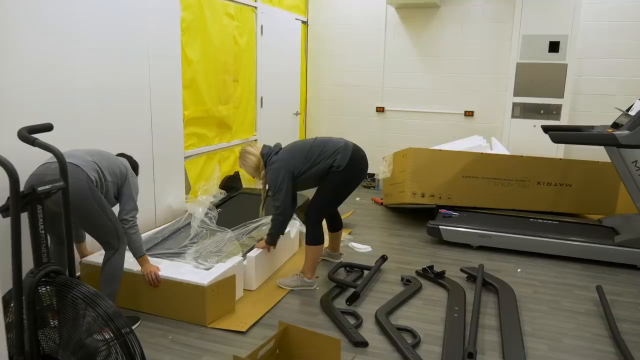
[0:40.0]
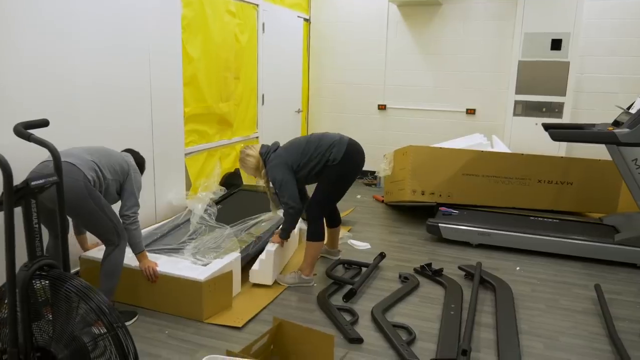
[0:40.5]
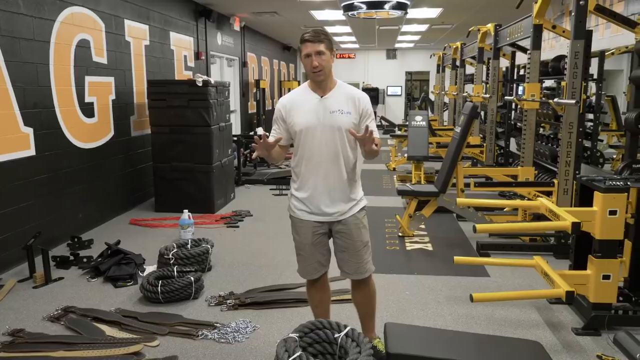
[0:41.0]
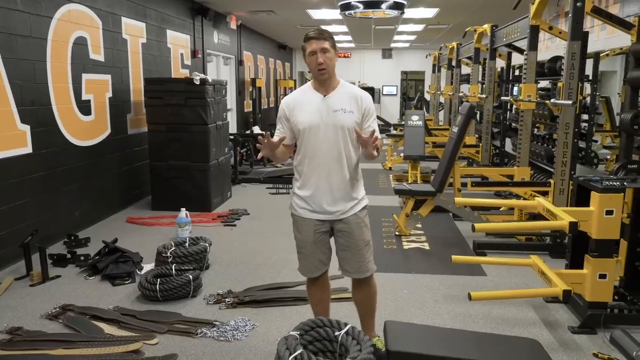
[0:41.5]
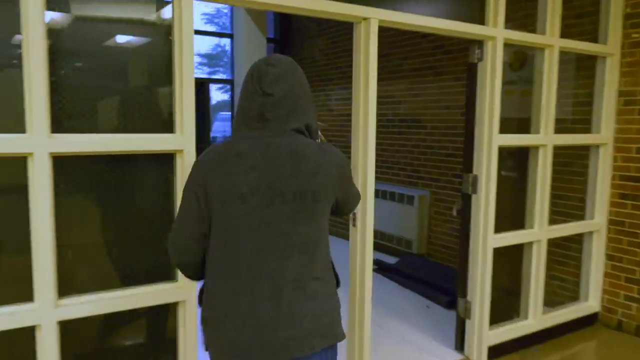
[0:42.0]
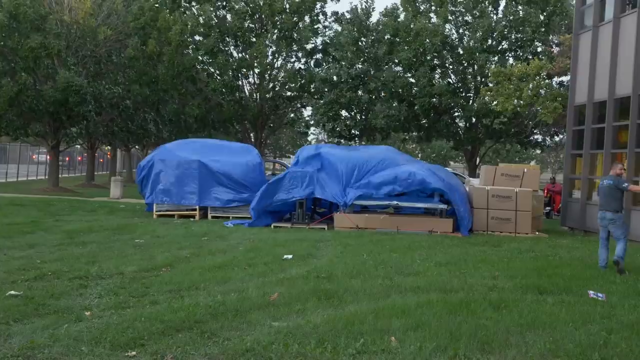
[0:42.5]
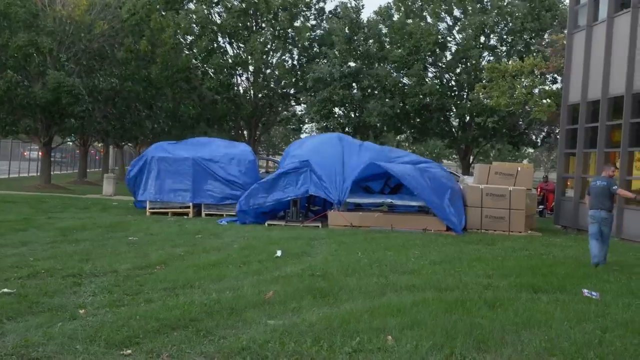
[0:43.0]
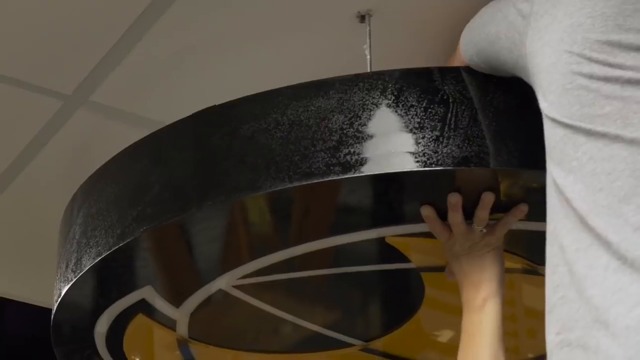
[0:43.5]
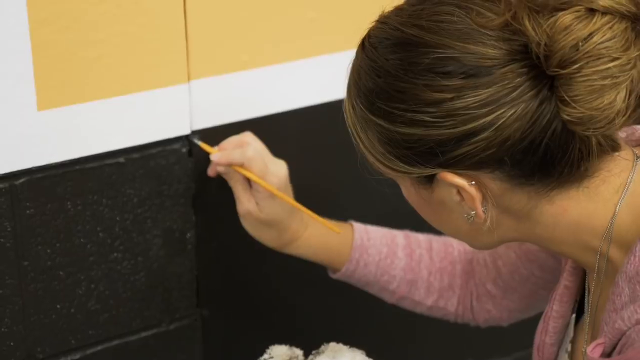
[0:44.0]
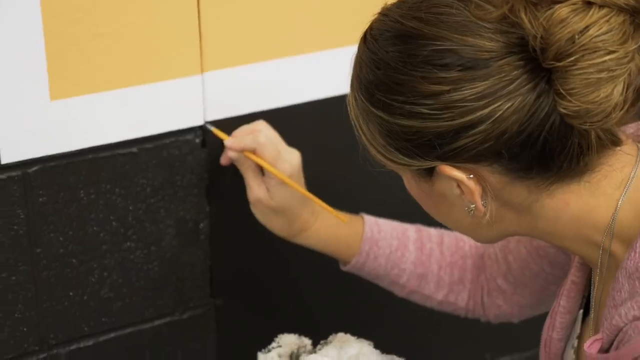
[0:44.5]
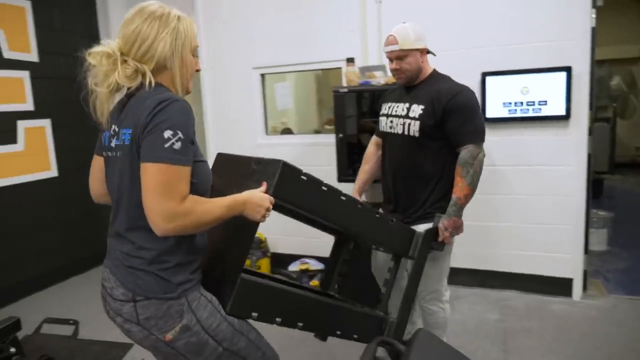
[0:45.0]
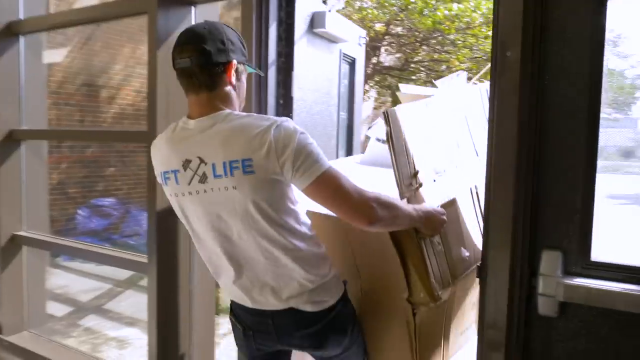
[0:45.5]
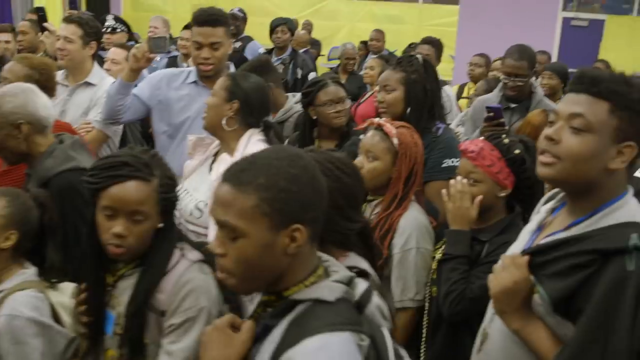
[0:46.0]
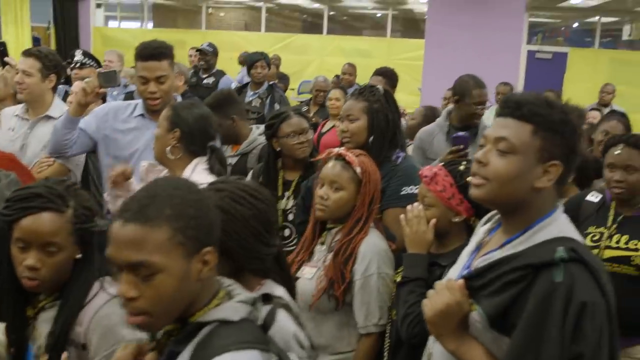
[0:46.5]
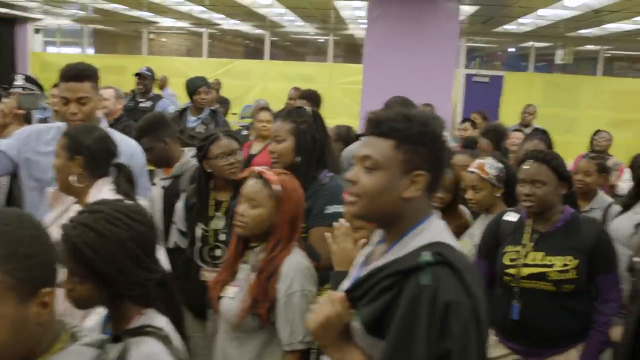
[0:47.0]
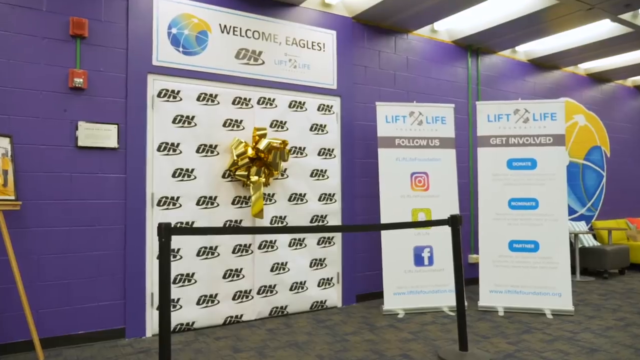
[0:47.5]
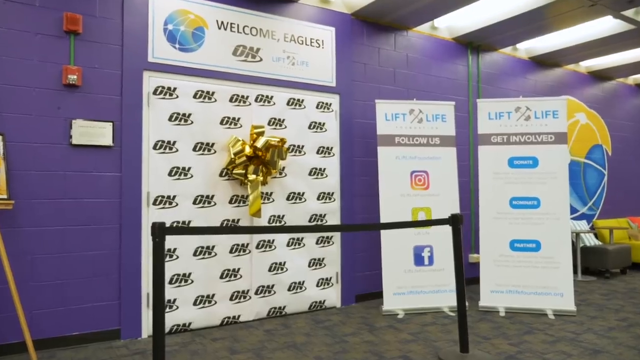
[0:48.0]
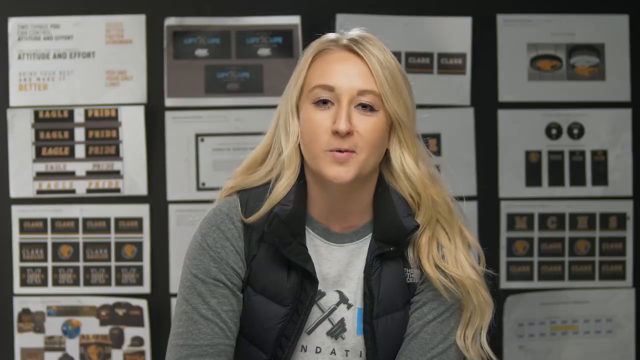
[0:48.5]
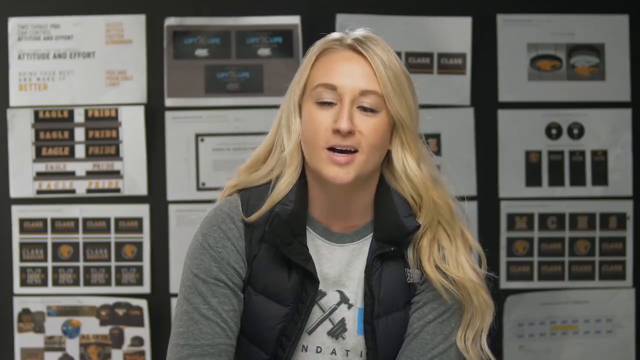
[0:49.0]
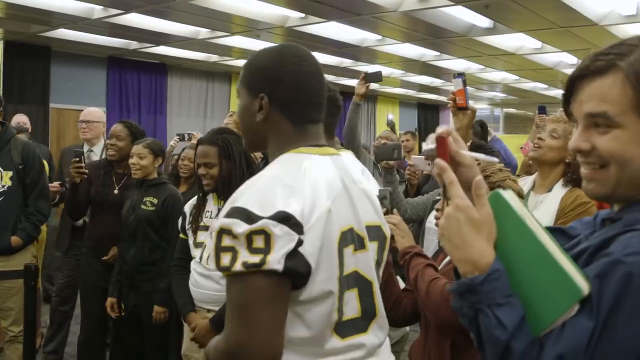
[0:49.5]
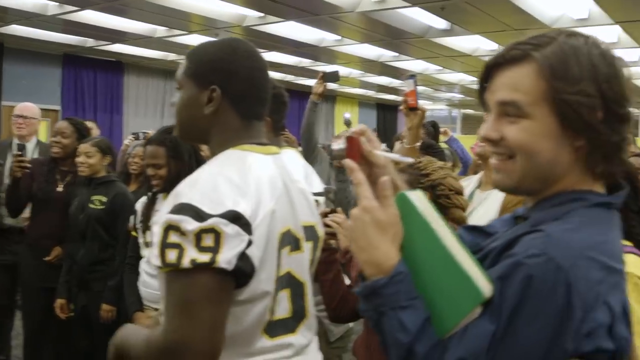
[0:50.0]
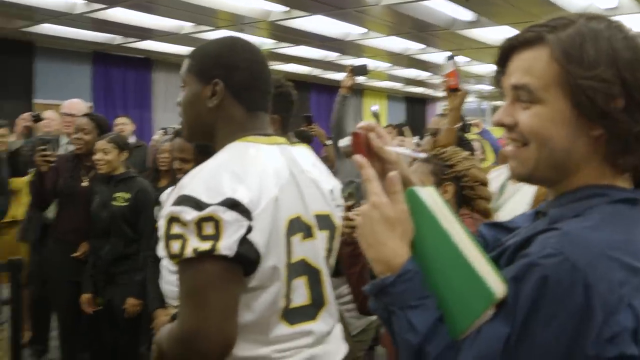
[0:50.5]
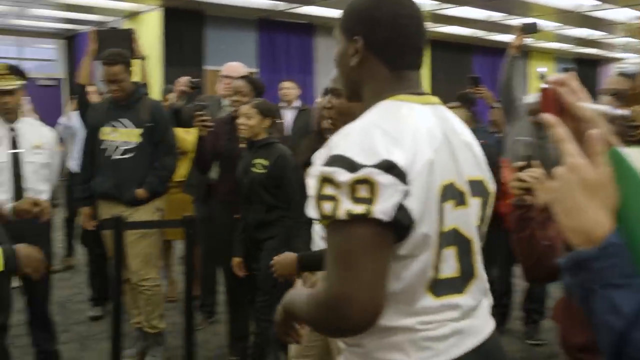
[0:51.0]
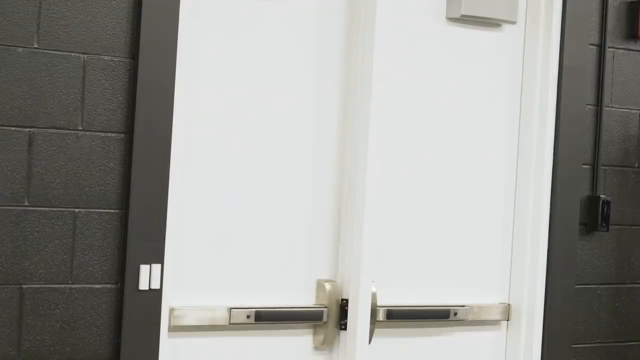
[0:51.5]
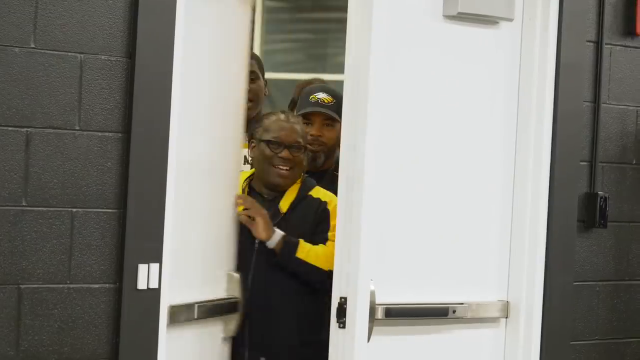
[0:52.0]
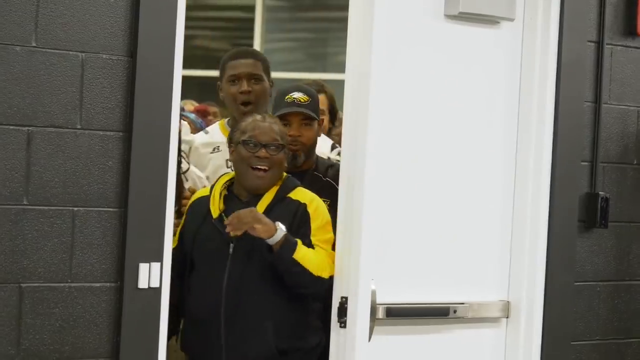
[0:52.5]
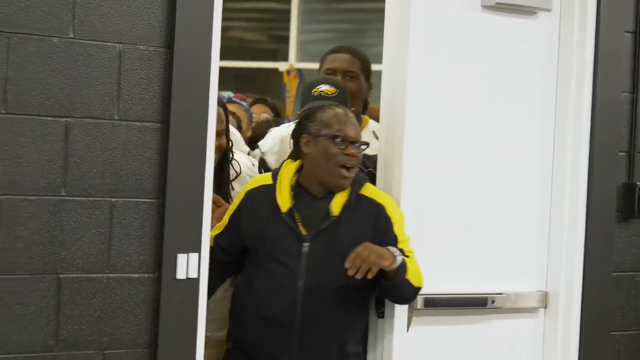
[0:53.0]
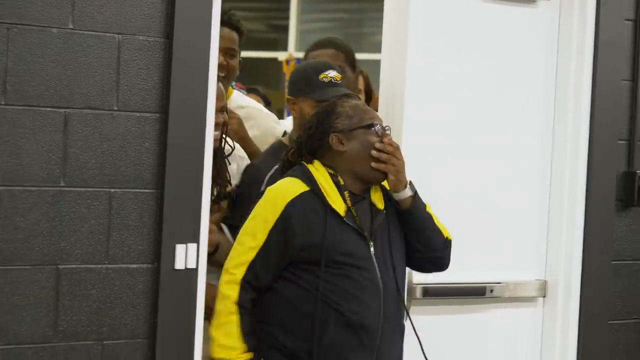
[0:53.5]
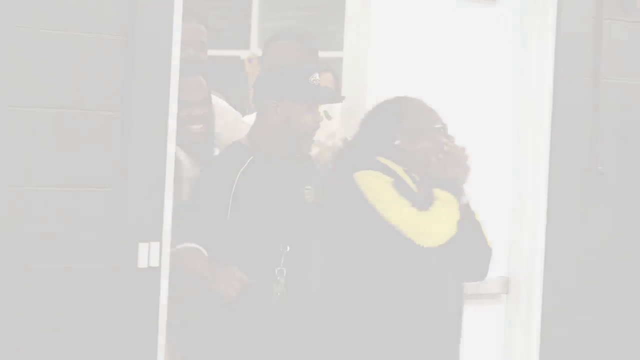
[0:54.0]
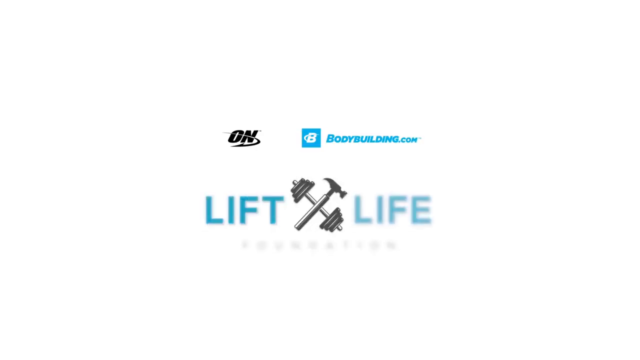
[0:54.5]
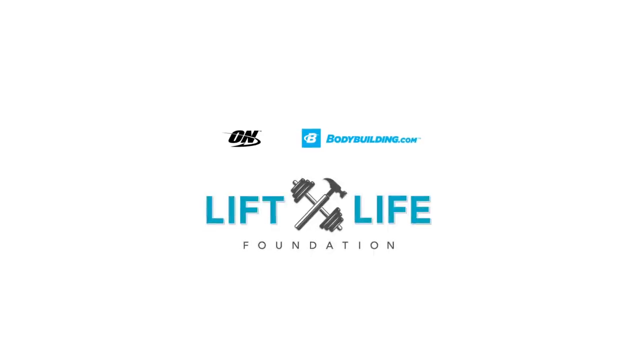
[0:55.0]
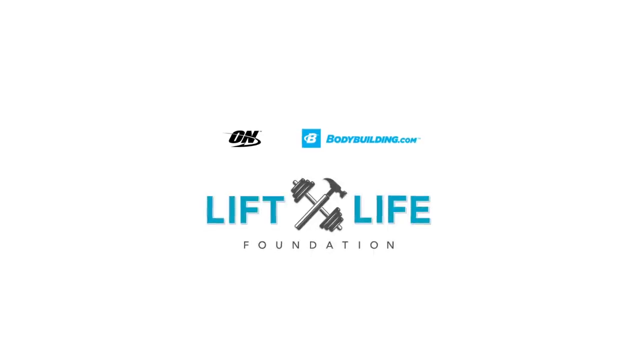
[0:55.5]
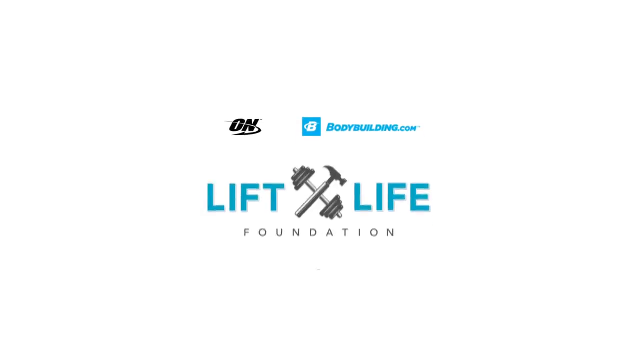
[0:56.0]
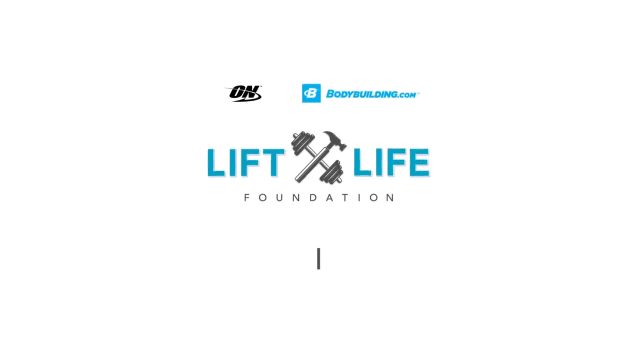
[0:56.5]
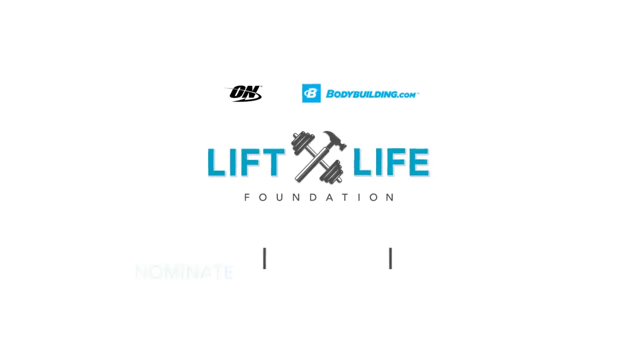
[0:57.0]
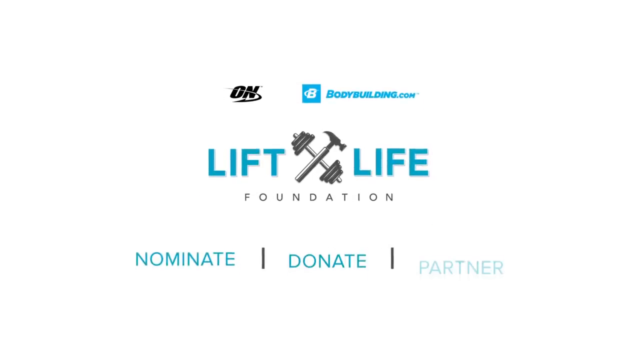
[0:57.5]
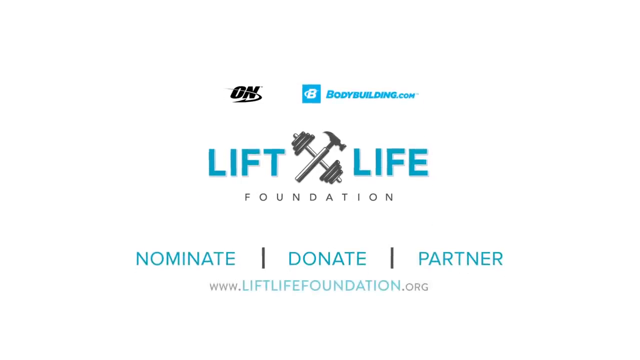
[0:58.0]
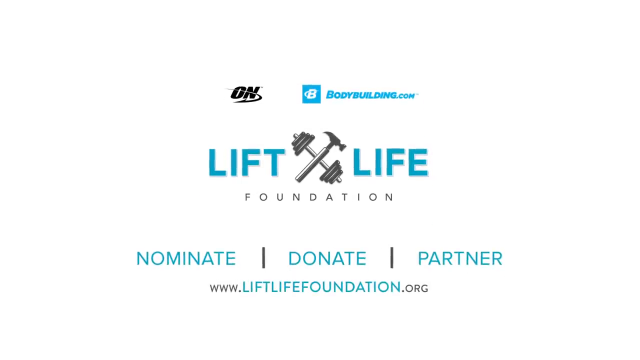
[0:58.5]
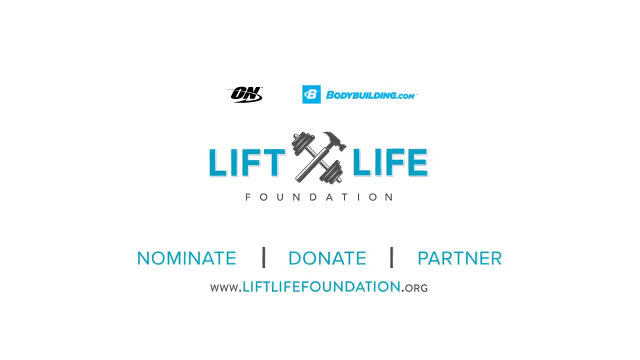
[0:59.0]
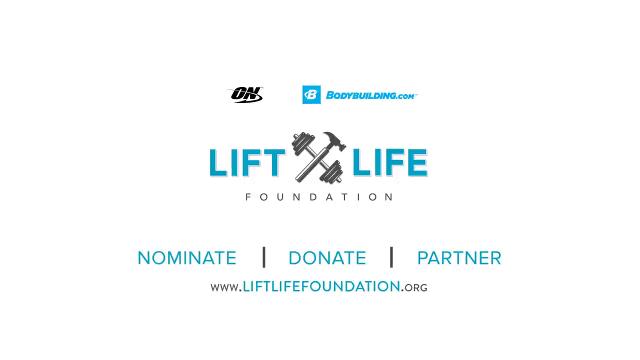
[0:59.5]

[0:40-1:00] People inside the gym appear to be unpacking some equipment: they lean over a big cardboard box with its lid off and remove white styrofoam from it, and what looks like the base of a treadmill is inside. A man in a white T-shirt and gray shorts stands in the middle of the gym speaking to the camera. The left wall of the gym is black, with orange letters that say "Eagle Pride". A person in a hoodie walks into the room. Equipment outside is covered in tarps. People work on the inside of the gym, apparently bringing more equipment into it, and other people take trash out of the gym. A bunch of students wait around as if waiting to see what's inside. The doors to the gym are closed, with a gold bow pinned to the front of the doors like a present.